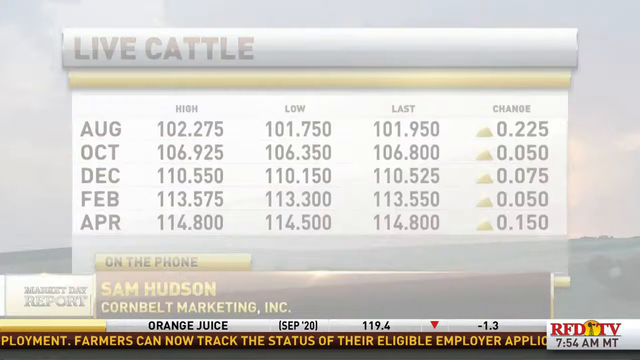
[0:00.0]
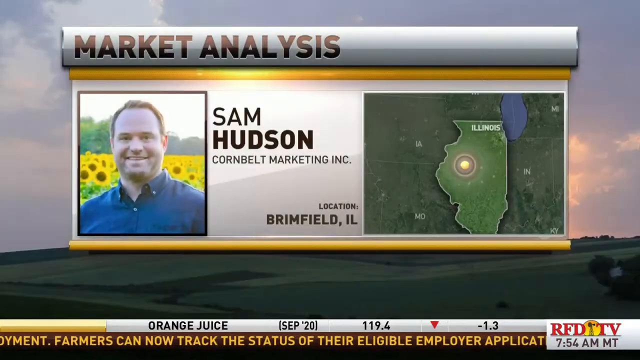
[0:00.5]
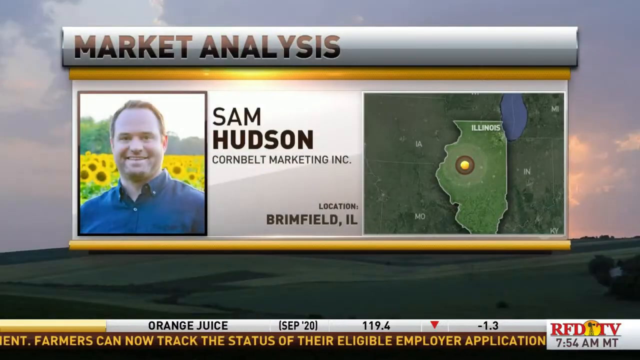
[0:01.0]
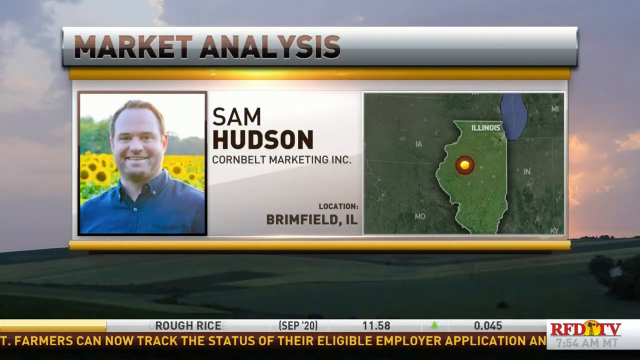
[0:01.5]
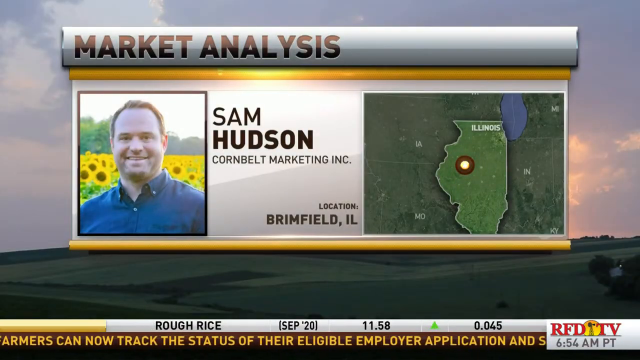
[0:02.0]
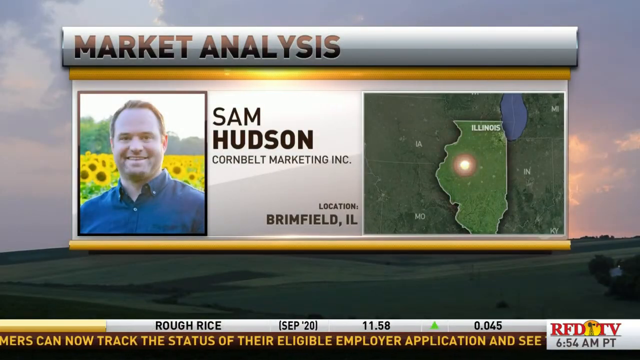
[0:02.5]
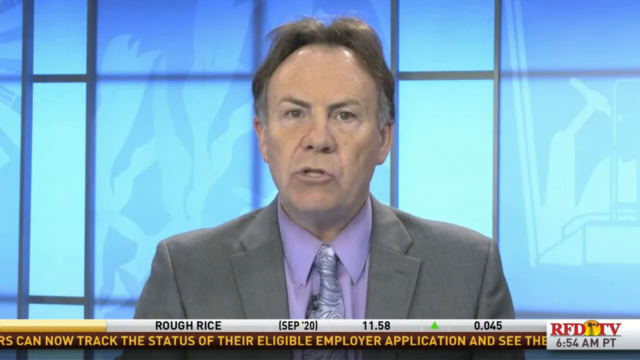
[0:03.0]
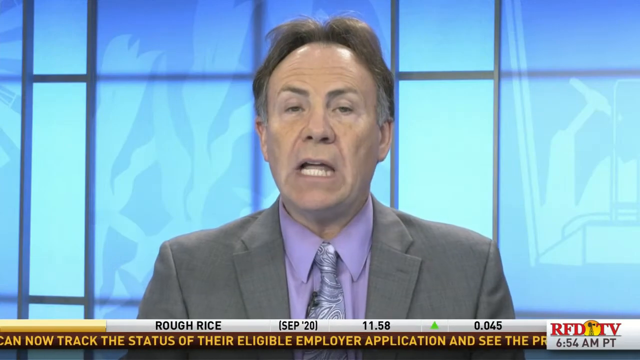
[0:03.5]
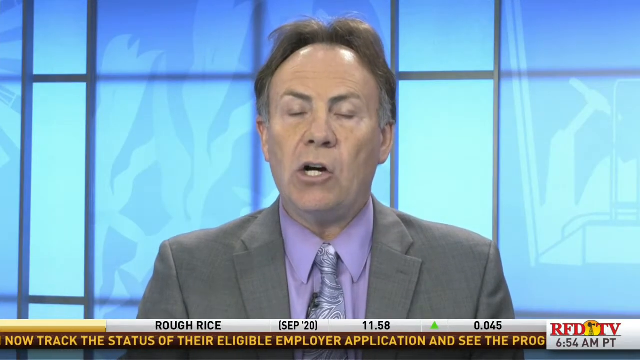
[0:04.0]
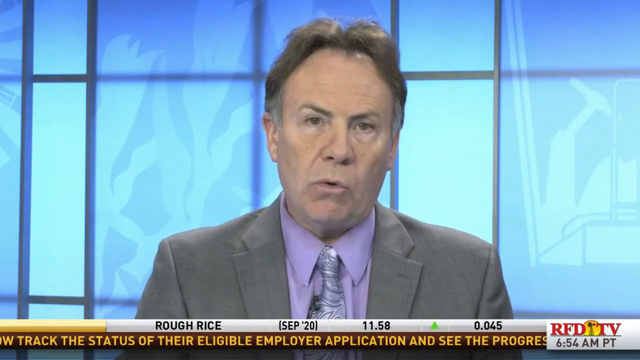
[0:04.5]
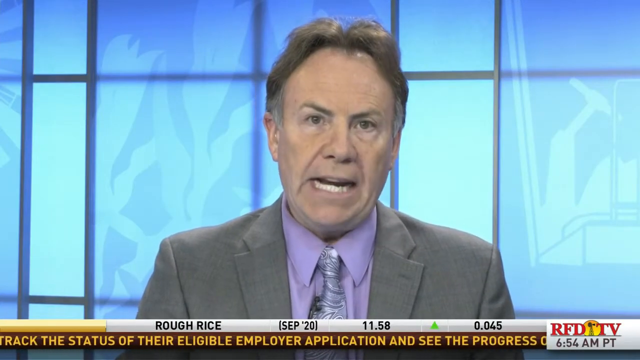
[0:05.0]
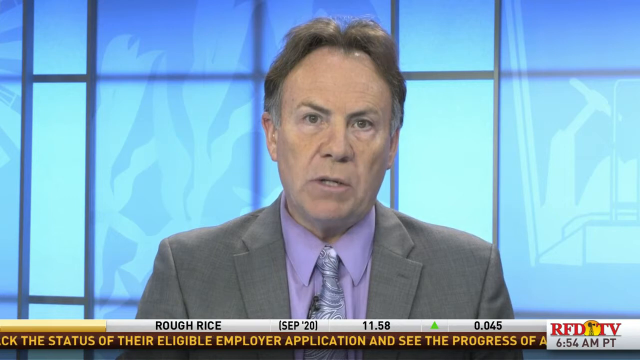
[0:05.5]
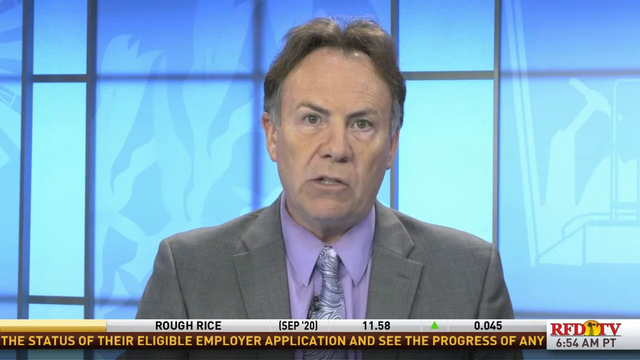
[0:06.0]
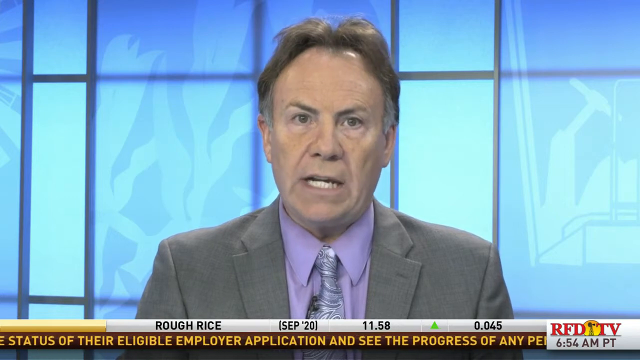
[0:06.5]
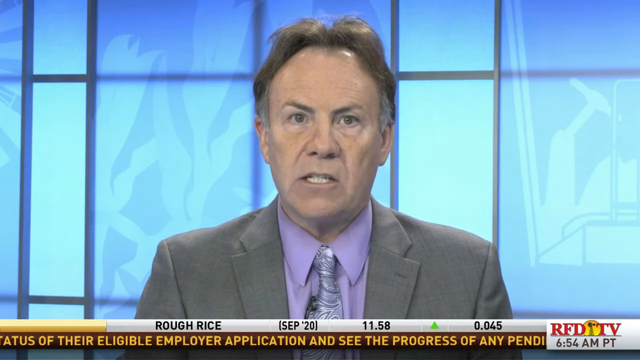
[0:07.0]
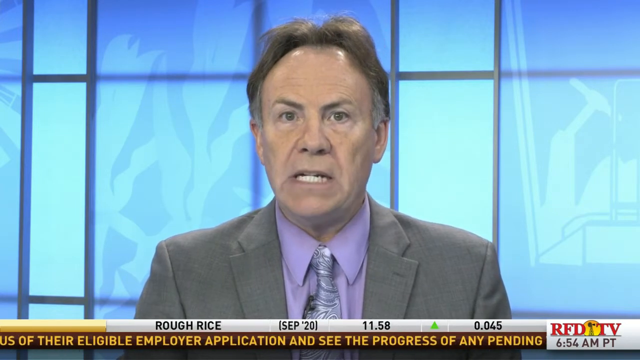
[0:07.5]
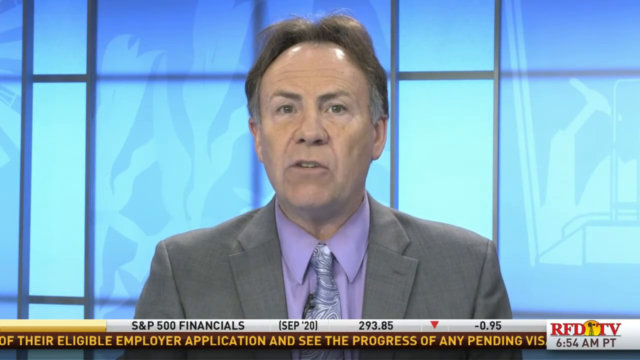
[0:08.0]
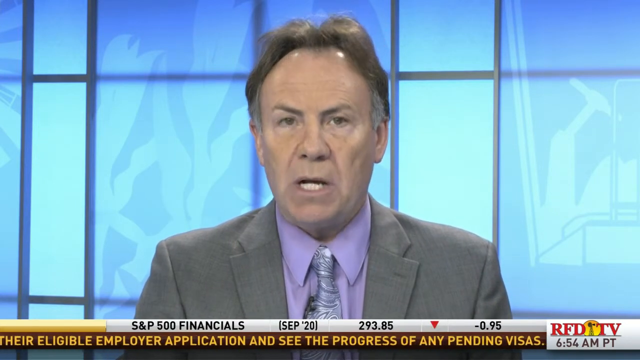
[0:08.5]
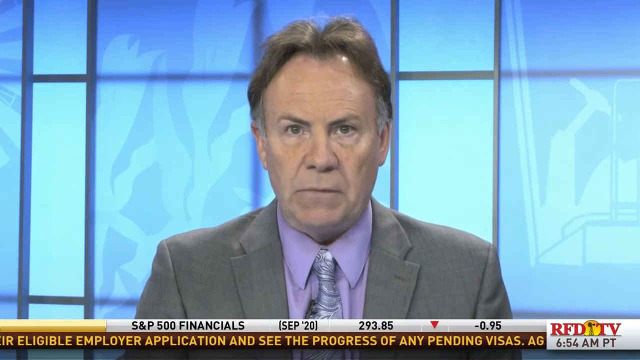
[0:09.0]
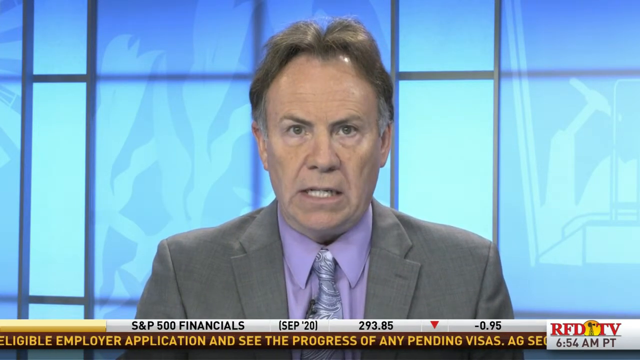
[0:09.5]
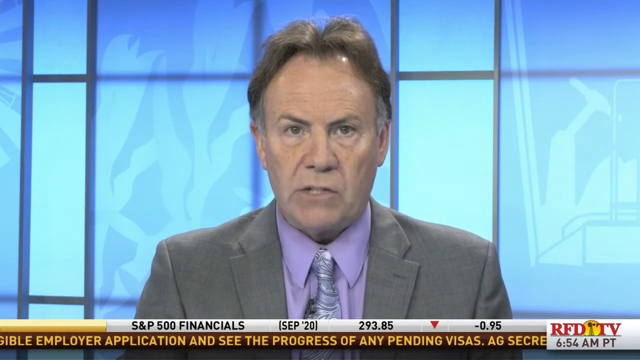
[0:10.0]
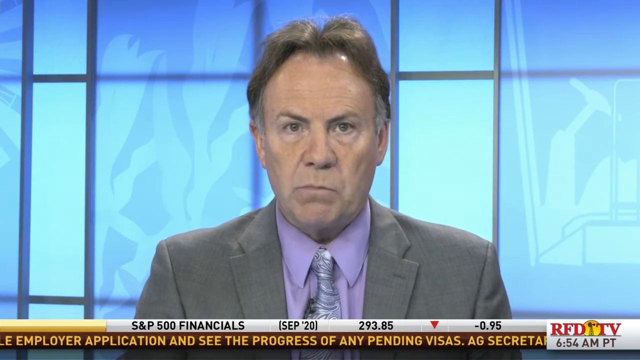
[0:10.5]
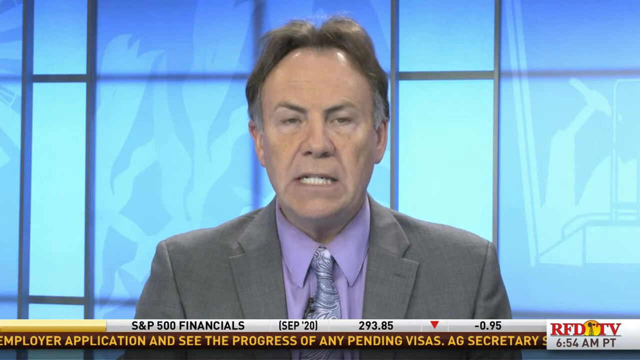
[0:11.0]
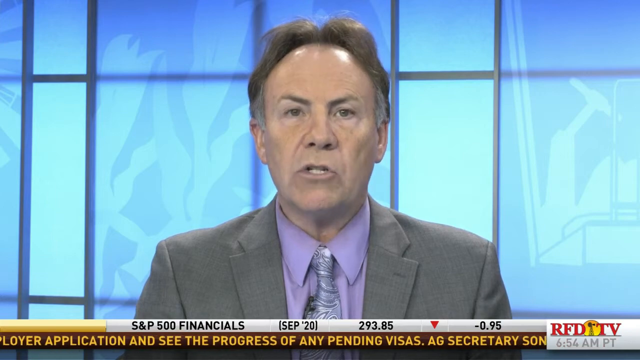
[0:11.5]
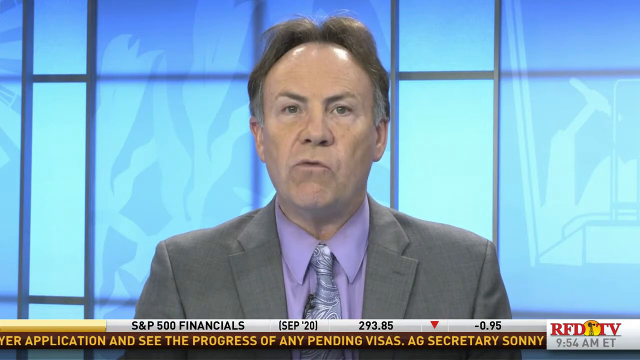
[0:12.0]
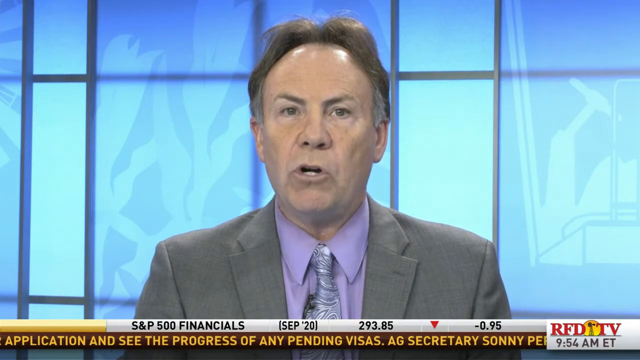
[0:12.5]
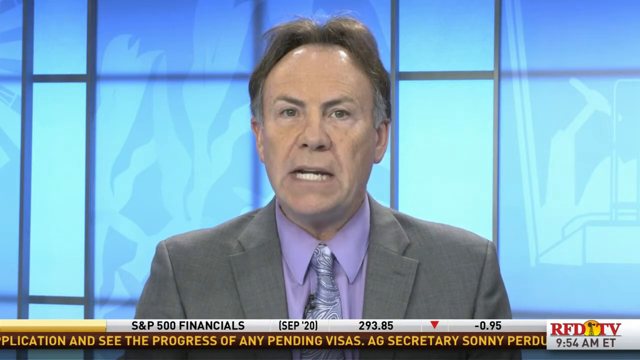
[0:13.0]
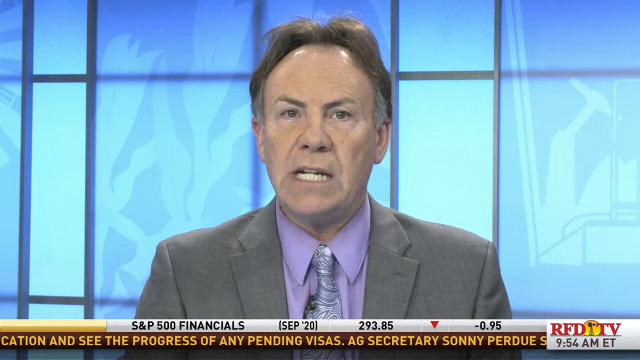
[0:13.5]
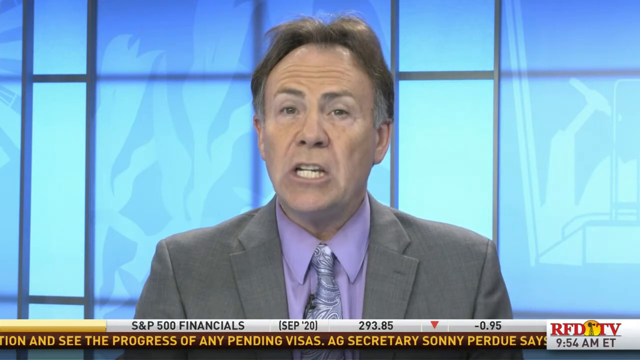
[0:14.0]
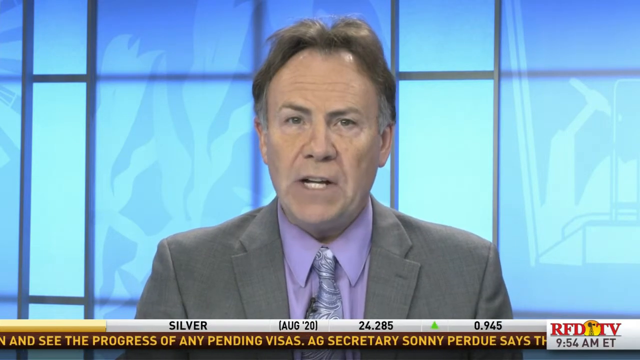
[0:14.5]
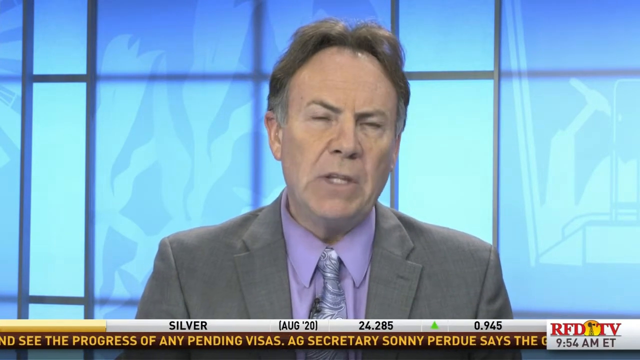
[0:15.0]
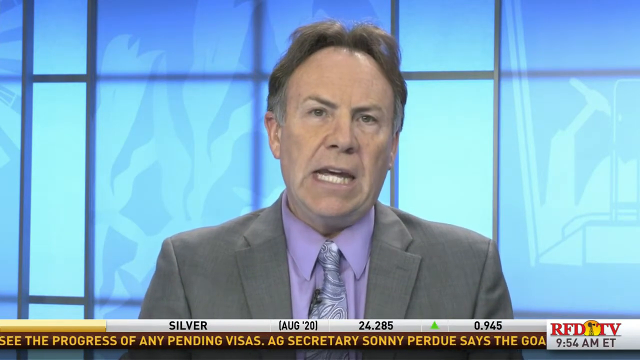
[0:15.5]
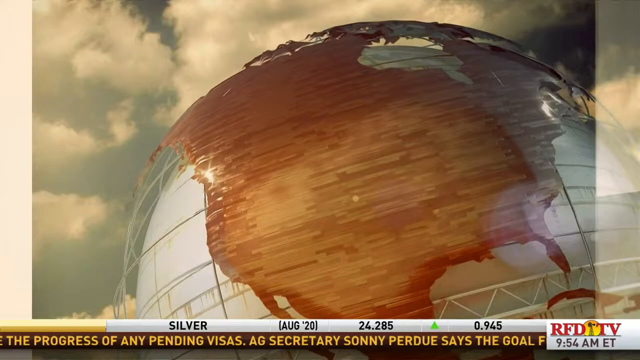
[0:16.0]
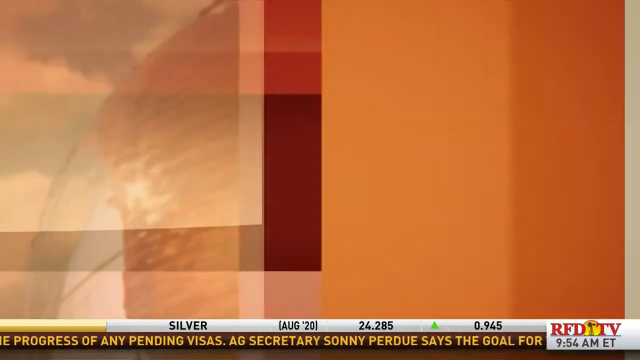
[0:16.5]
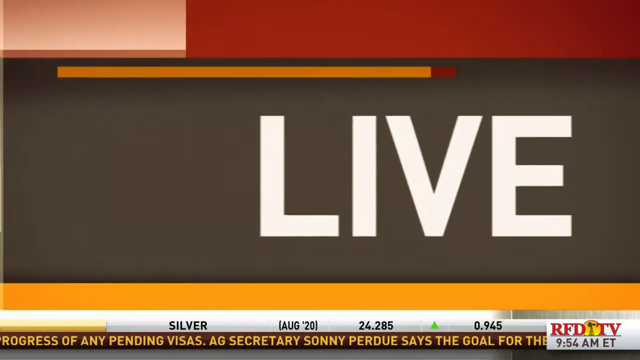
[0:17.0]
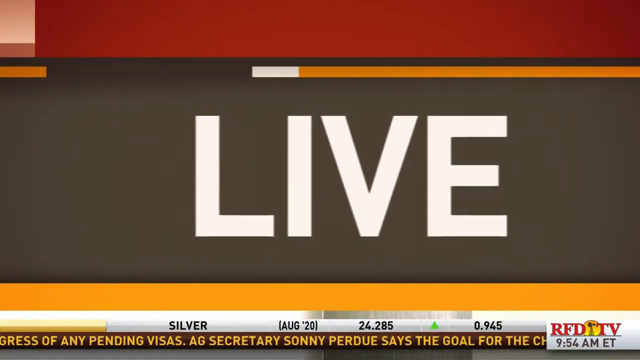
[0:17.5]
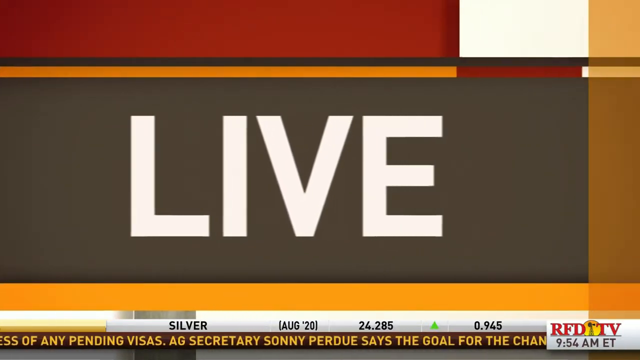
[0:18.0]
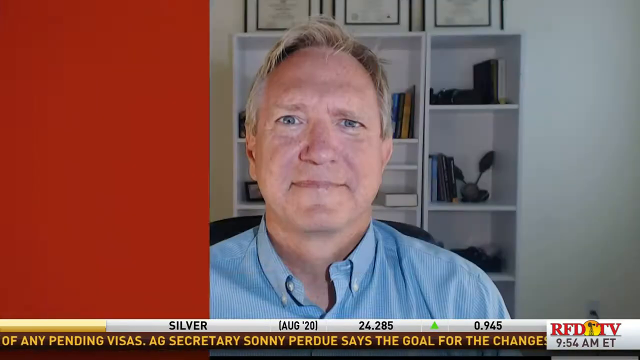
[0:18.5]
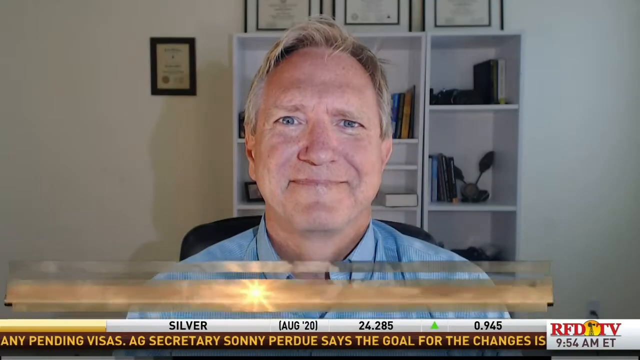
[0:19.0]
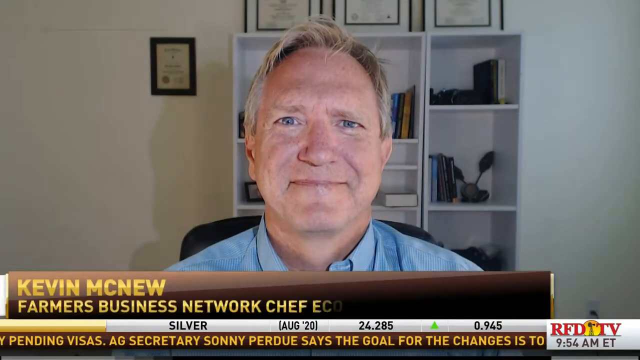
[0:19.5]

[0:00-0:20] A table lists months (August, October, December, February and April), each with figures under the headings high, low, last and change. A presenter in a studio is a white man with dark hair wearing a jacket and a purple tie; behind him is a blue image. An invited guest named Kevin then appears.